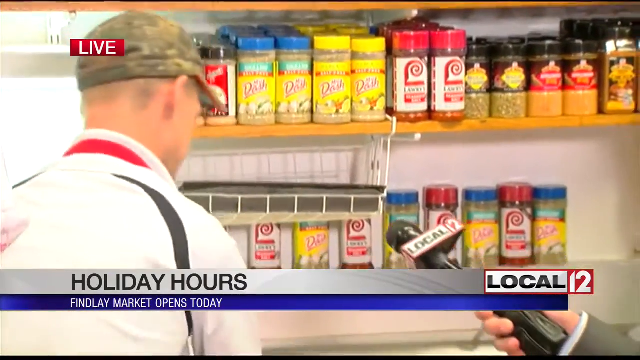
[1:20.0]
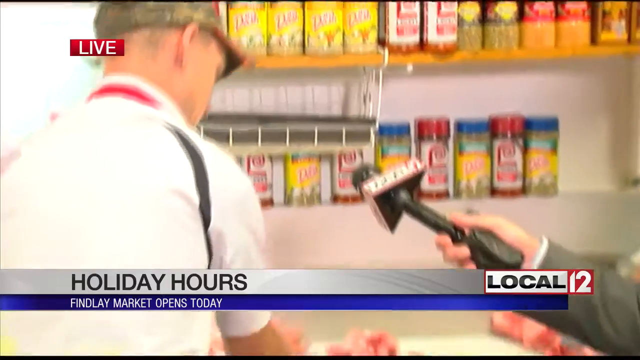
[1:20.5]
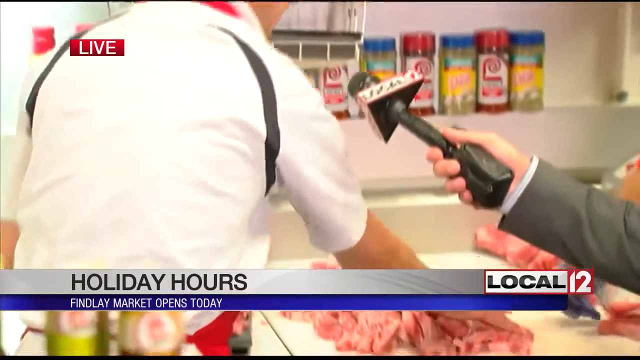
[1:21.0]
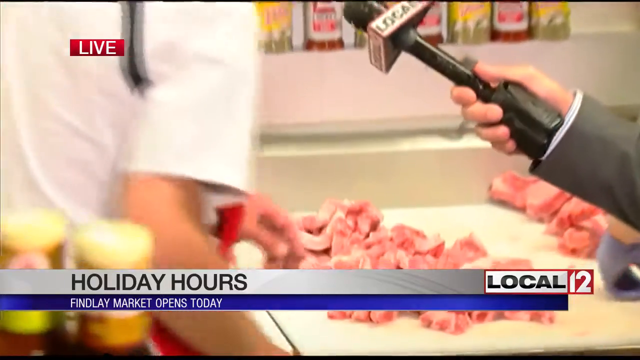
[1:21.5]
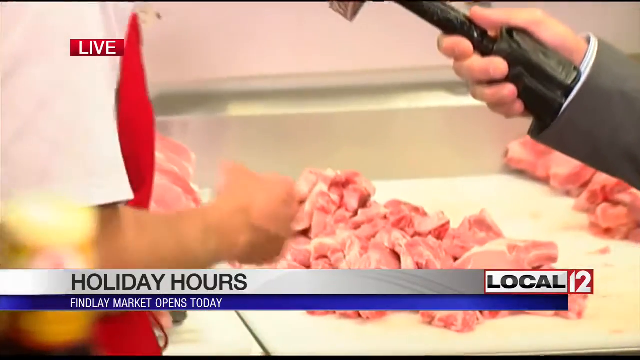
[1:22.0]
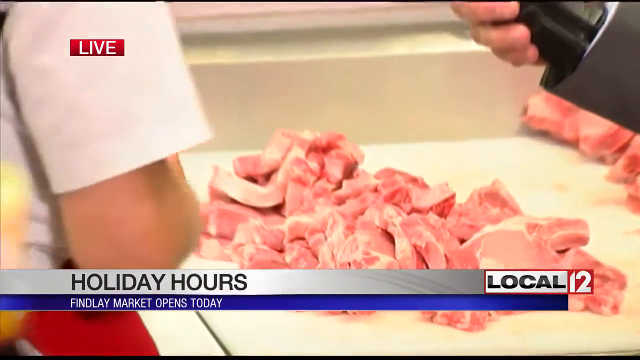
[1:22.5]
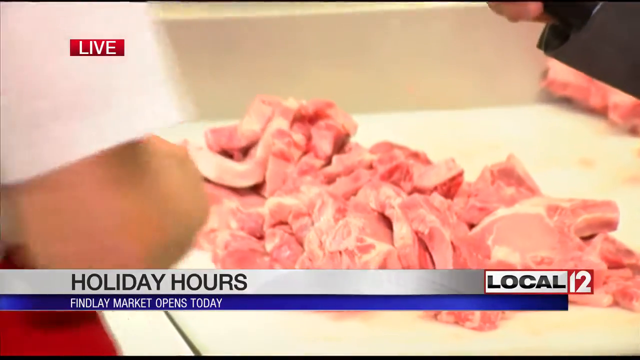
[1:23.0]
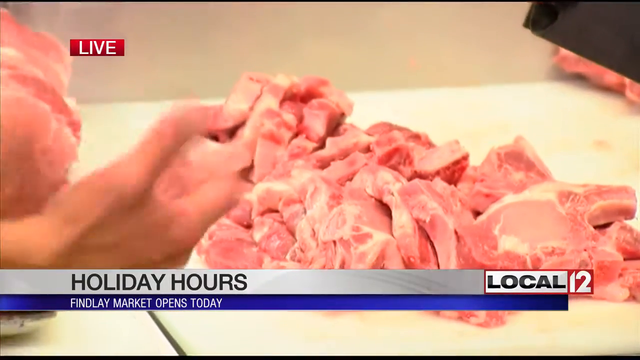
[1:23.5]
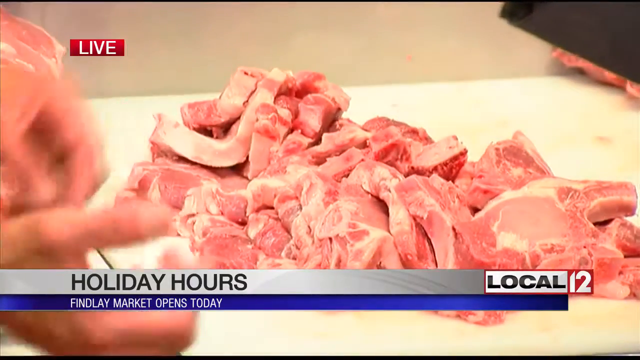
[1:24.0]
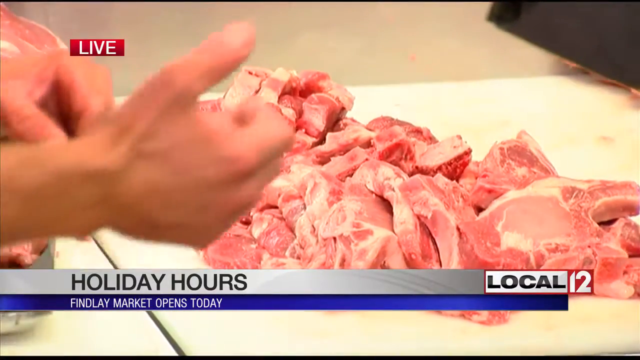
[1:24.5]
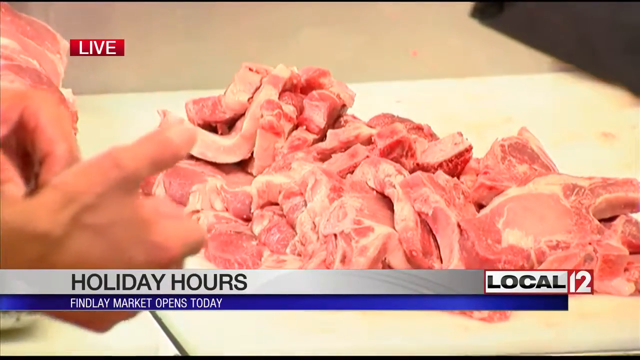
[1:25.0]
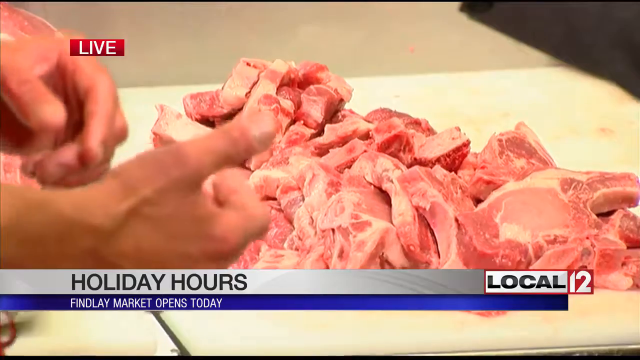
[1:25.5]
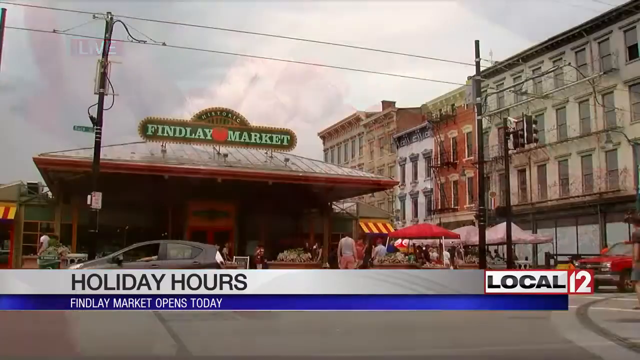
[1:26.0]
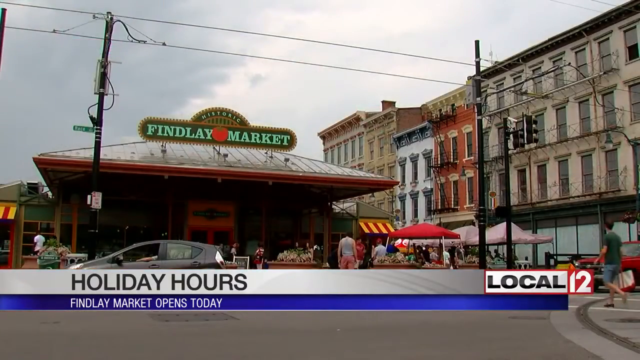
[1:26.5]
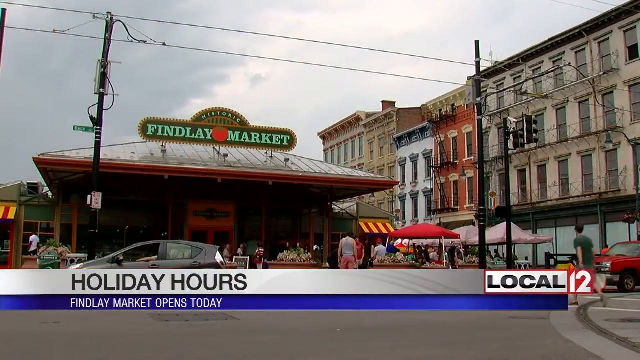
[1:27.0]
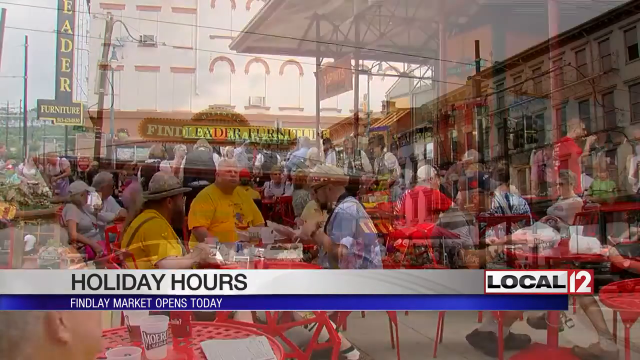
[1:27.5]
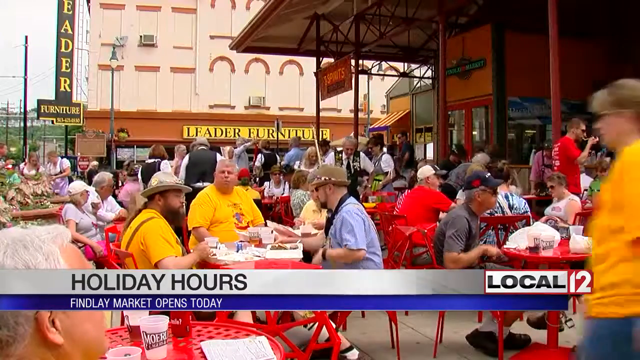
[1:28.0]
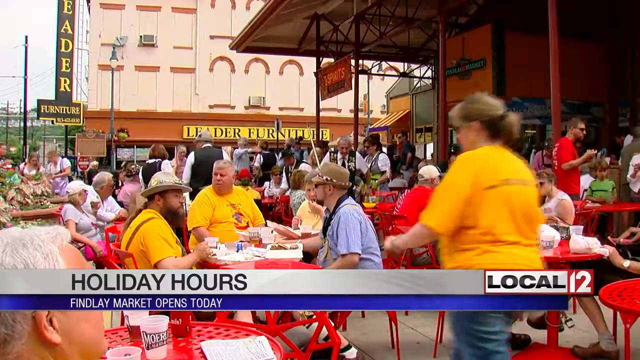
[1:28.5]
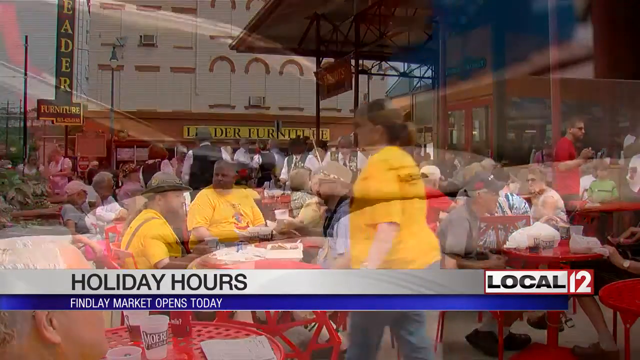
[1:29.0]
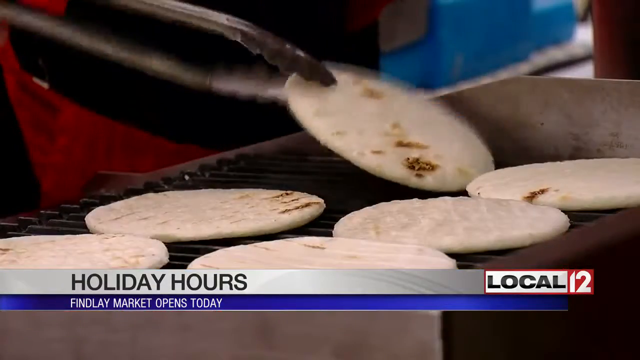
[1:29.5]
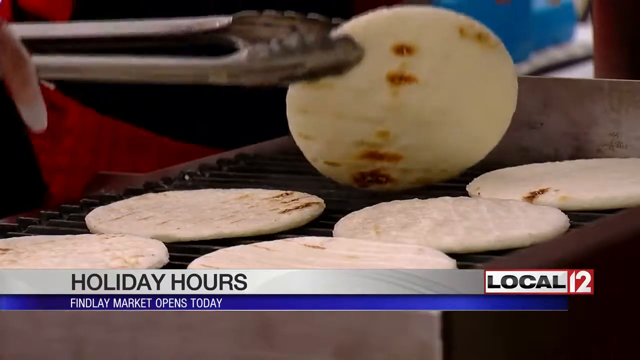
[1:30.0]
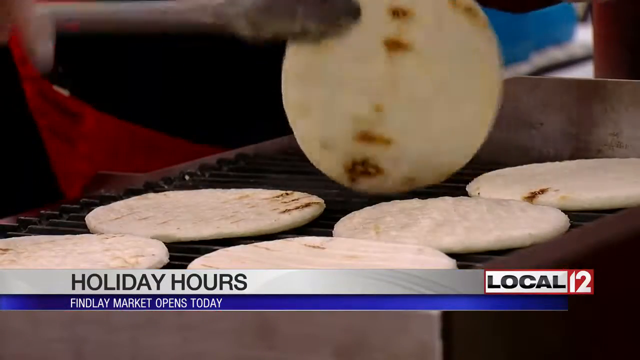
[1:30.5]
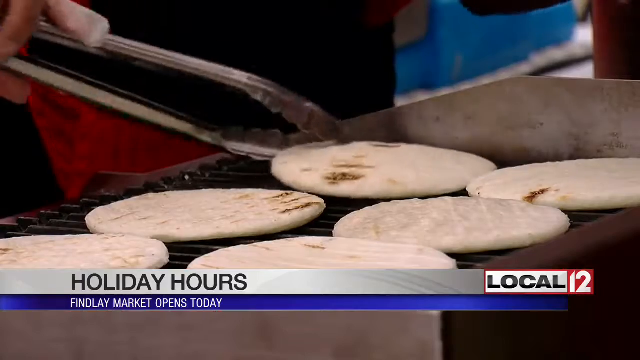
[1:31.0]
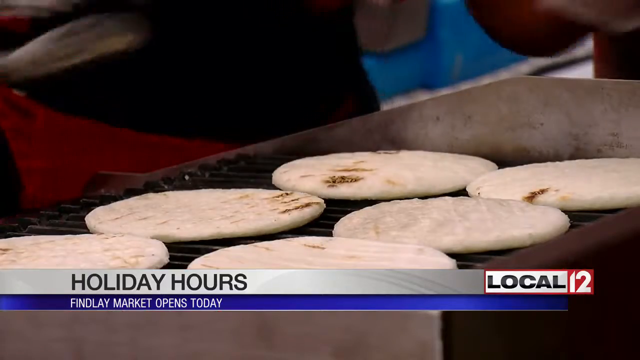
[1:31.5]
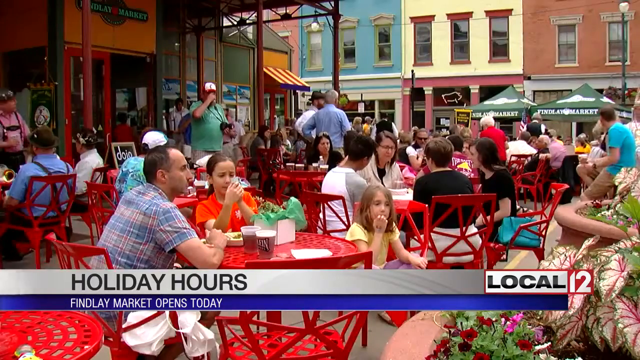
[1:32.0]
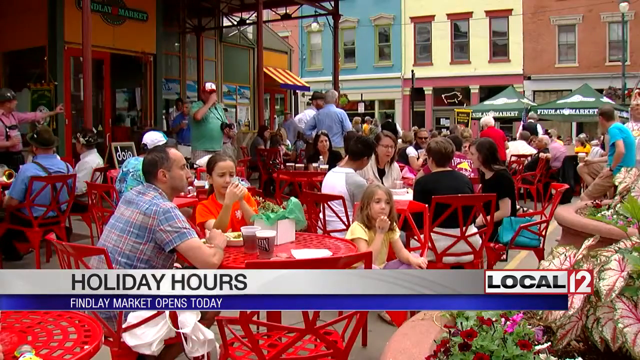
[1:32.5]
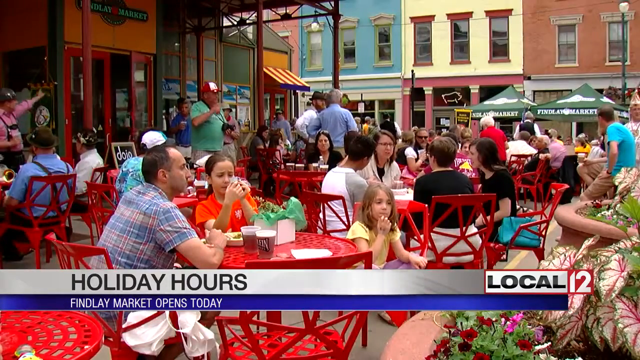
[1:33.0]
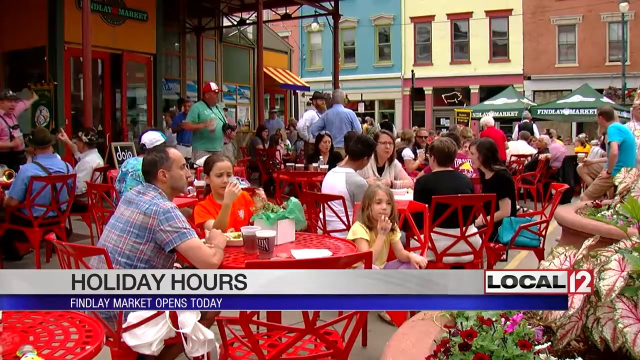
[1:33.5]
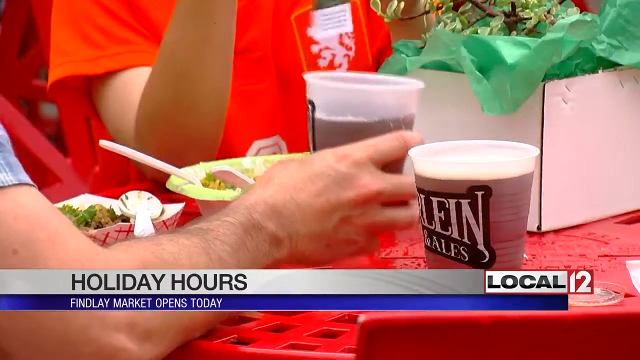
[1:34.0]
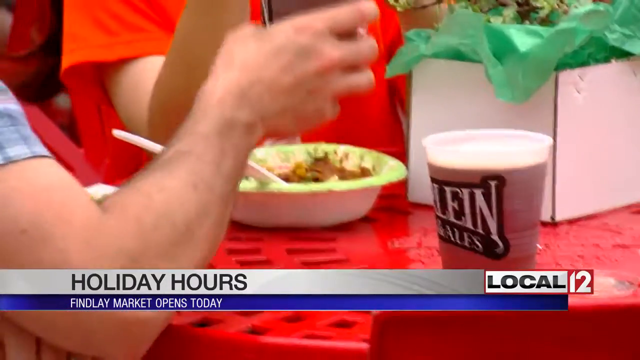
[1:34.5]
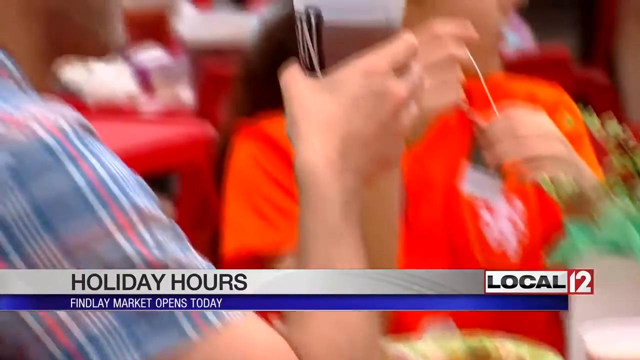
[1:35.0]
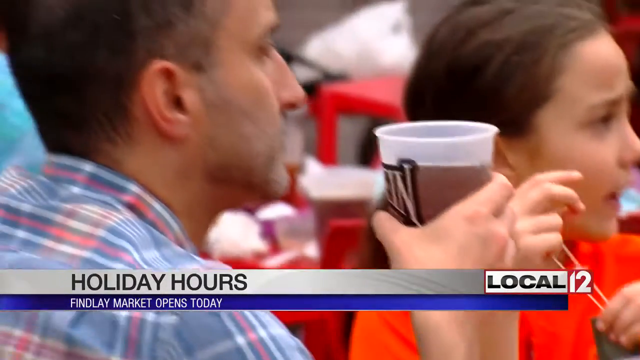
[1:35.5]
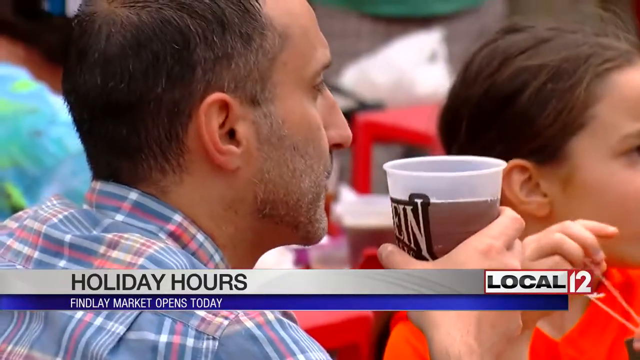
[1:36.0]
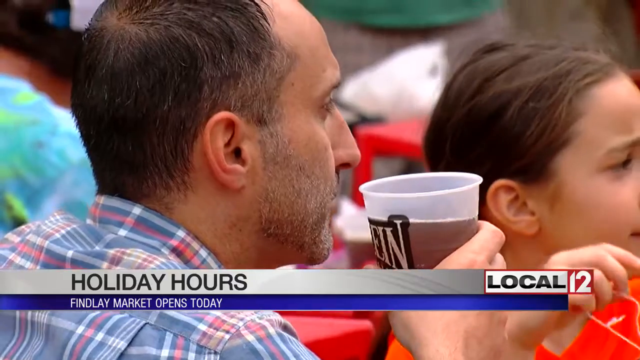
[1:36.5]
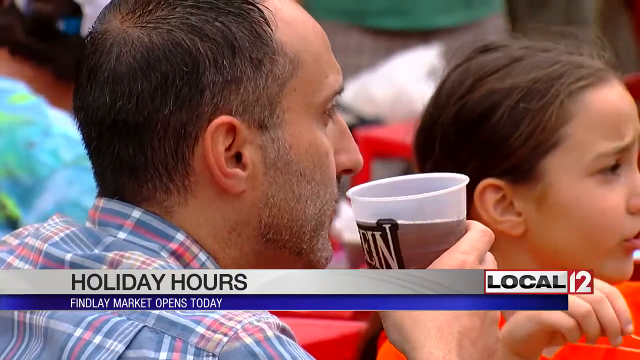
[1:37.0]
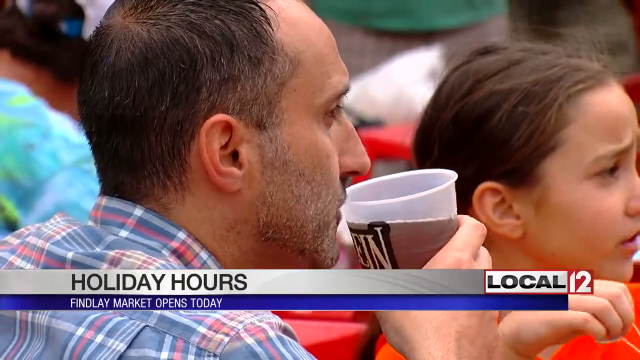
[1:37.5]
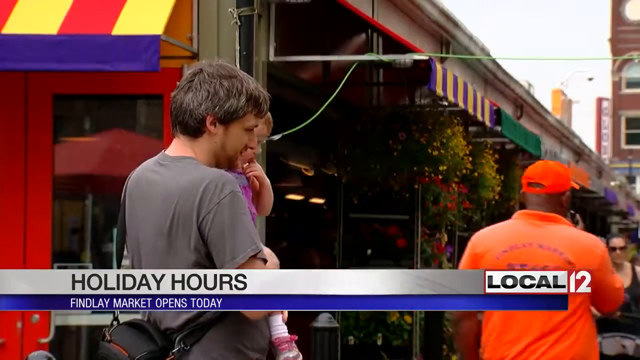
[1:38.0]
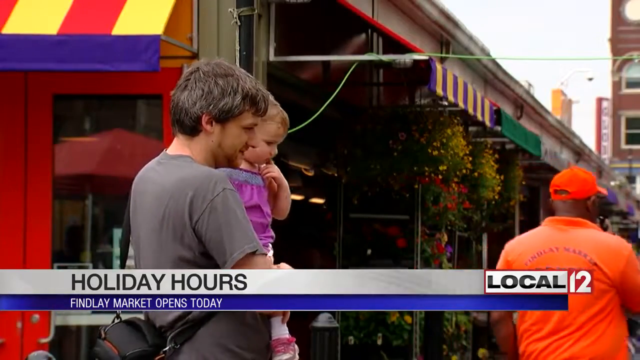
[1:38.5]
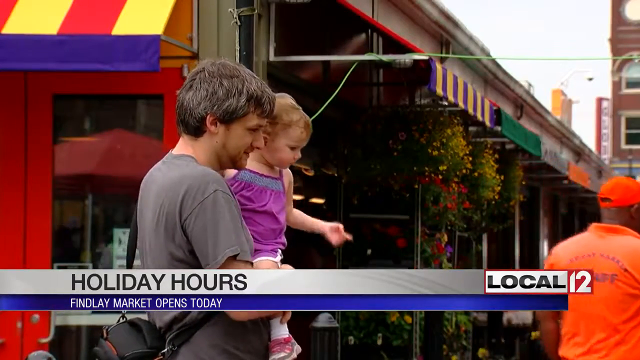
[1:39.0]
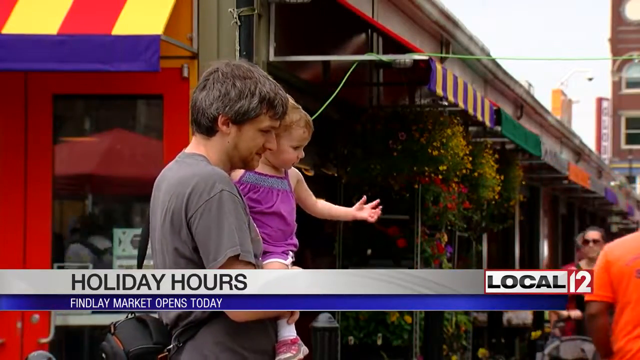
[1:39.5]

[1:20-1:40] The man in the green hat and white polo continues working as the news anchor, to the right, holds the microphone near him; he moves pieces of meat from a pile and organizes them to the left. The picture changes to the outside of the building, Historic Findlay Market, whose green "Findlay Market" sign has a tomato in the middle. At the bottom some people stand and walk by, and a car is parked in front. The next shot shows people sitting at red tables with red chairs outside, eating; they mostly seem to be Caucasian. Then someone grills circular white patties that look like bread, flipping them with metal tongs. Another shot shows more people at the red tables and chairs, talking and eating: many men, women and children, with some people standing and talking. A middle-aged man, balding somewhat at the front of his head, picks up a cup of beer while speaking. The next shot shows what looks like a father carrying his child.